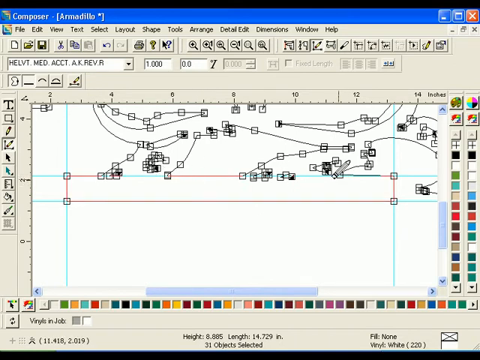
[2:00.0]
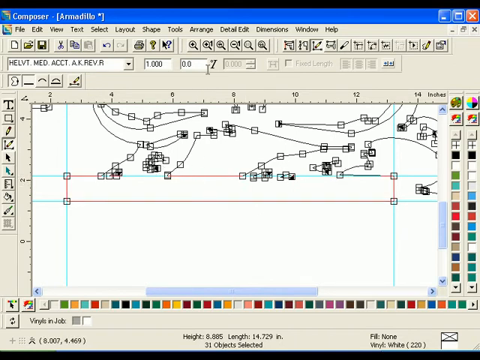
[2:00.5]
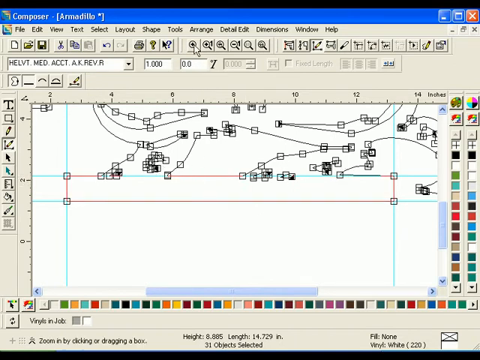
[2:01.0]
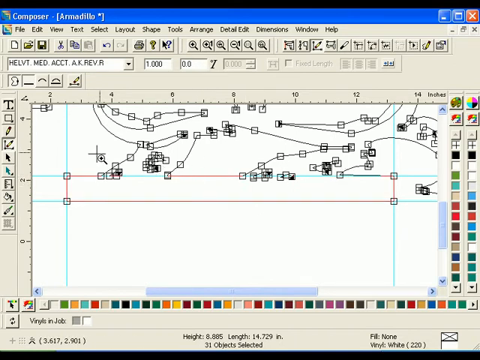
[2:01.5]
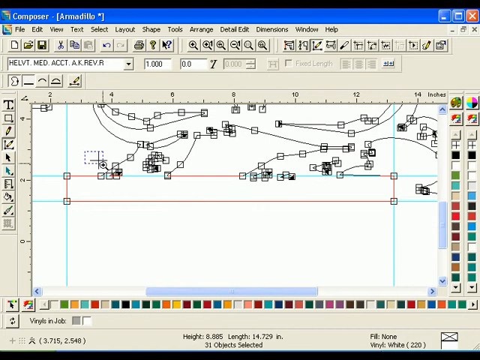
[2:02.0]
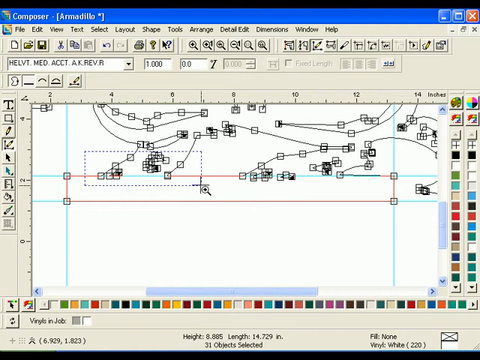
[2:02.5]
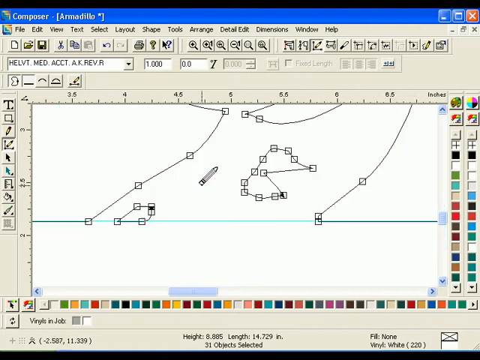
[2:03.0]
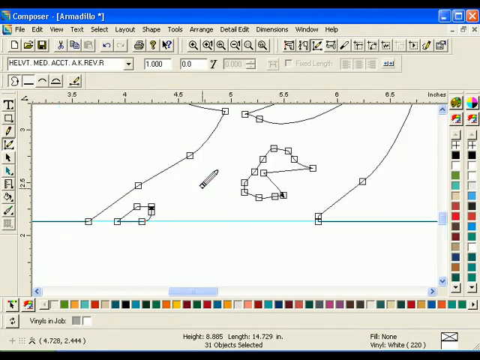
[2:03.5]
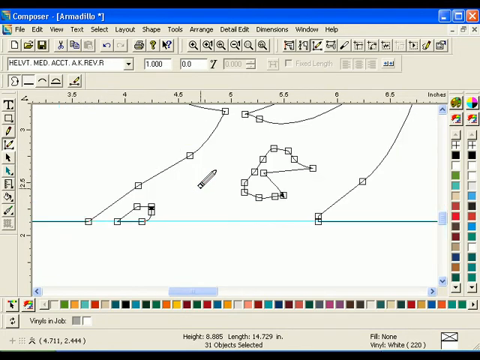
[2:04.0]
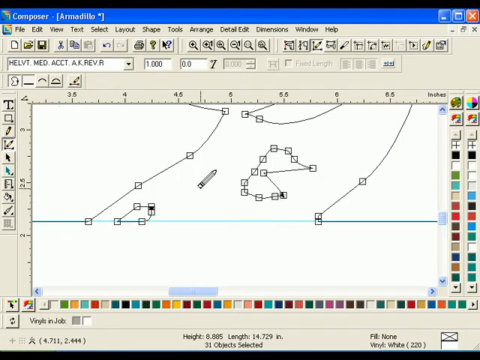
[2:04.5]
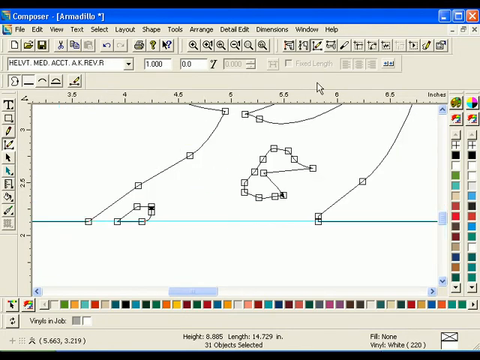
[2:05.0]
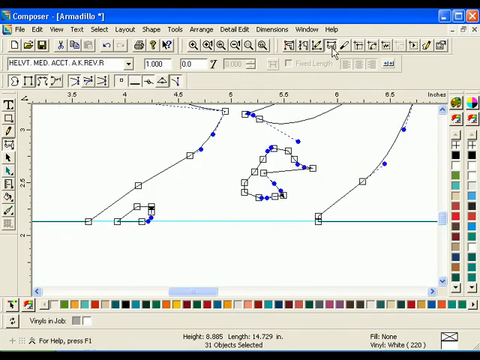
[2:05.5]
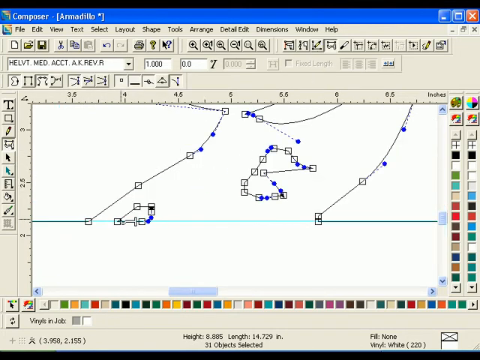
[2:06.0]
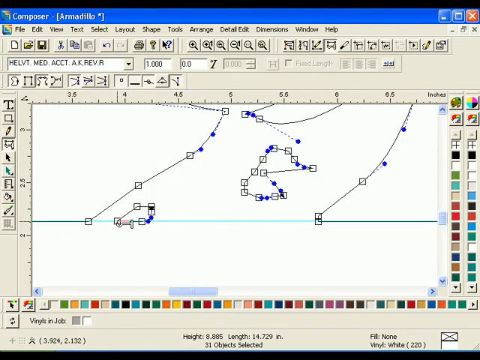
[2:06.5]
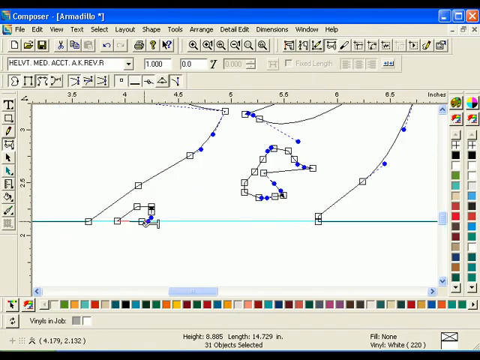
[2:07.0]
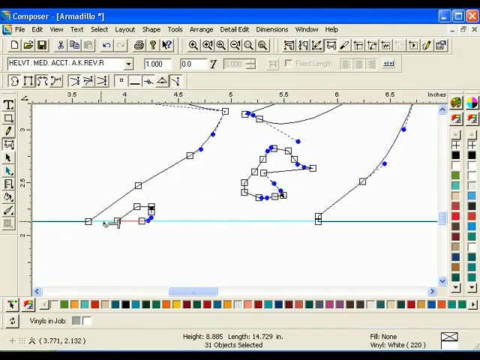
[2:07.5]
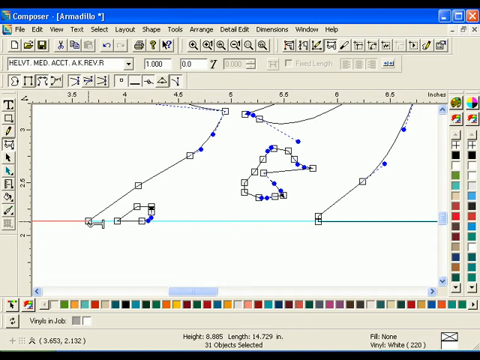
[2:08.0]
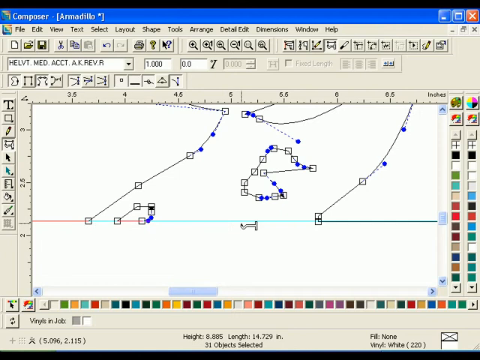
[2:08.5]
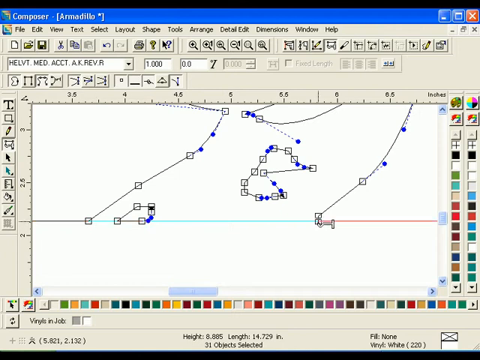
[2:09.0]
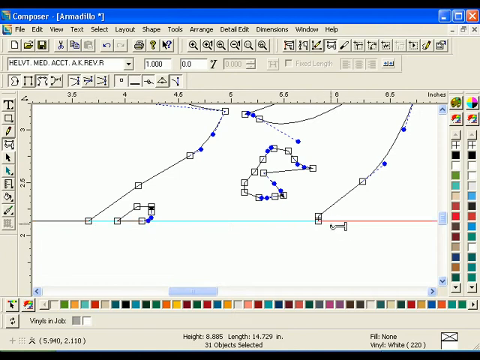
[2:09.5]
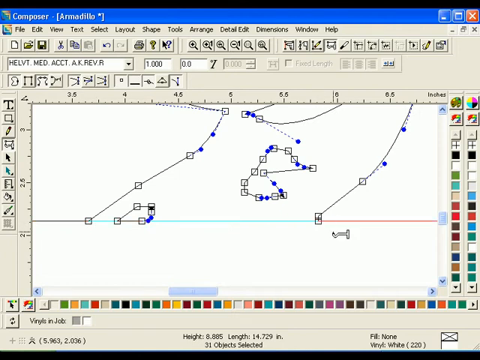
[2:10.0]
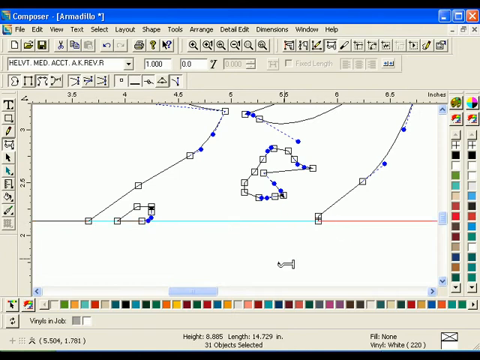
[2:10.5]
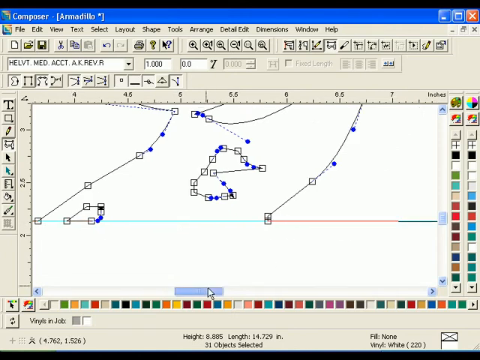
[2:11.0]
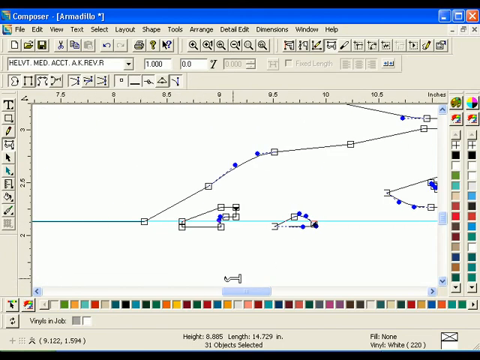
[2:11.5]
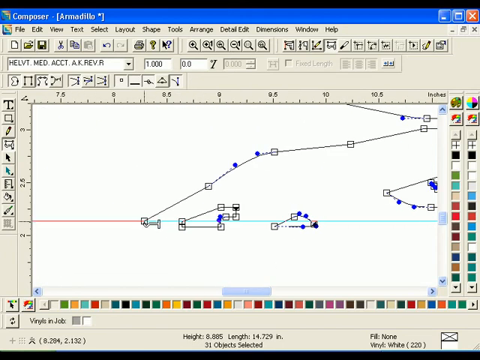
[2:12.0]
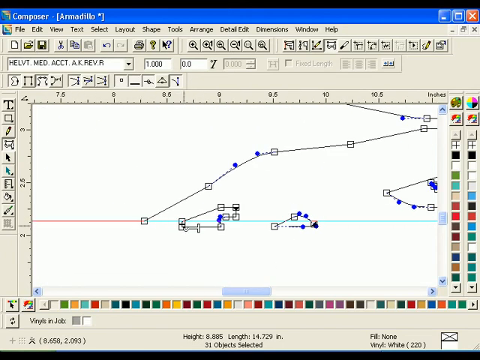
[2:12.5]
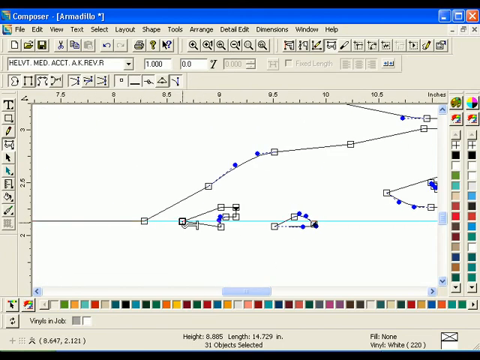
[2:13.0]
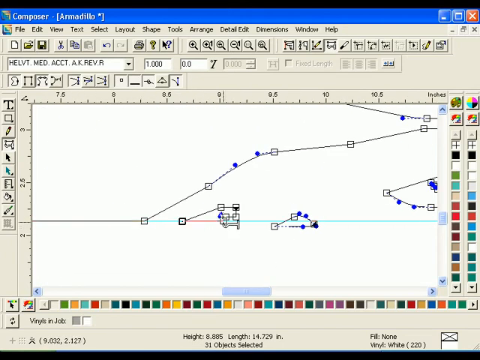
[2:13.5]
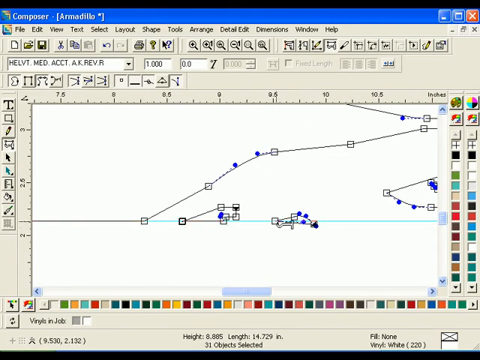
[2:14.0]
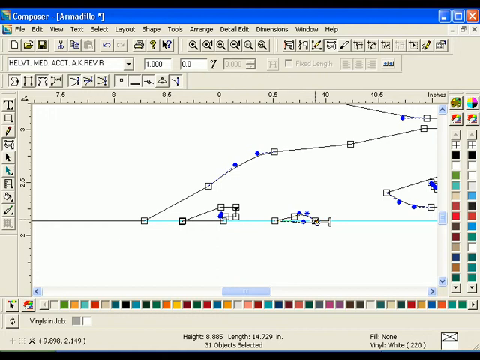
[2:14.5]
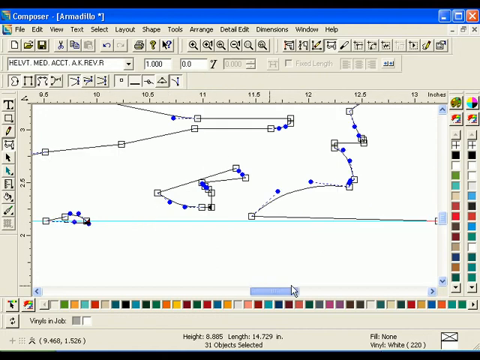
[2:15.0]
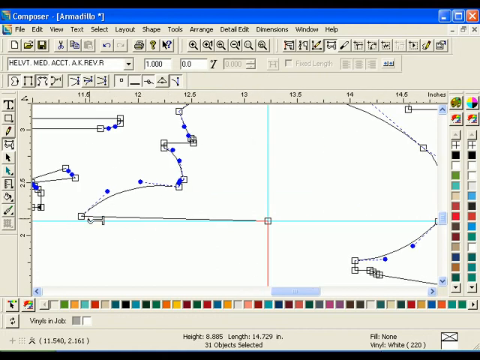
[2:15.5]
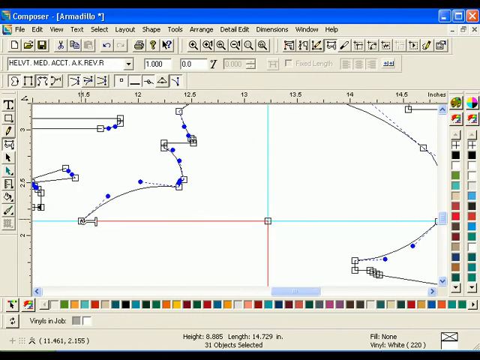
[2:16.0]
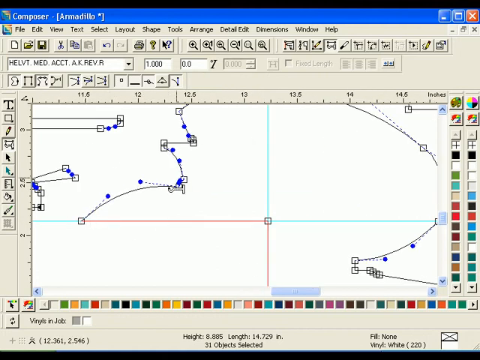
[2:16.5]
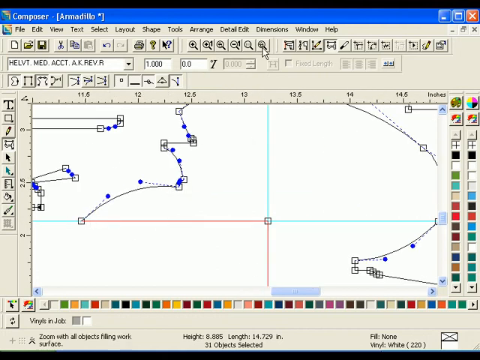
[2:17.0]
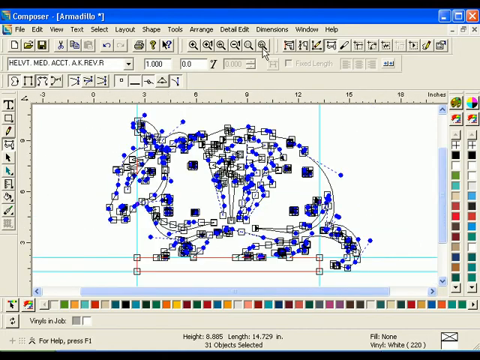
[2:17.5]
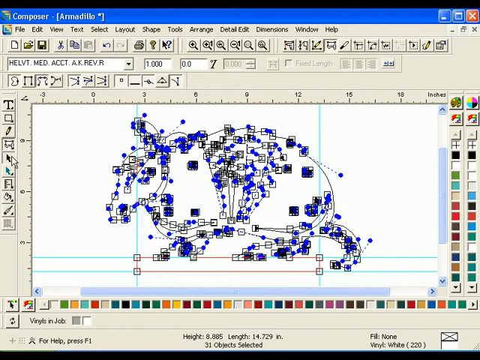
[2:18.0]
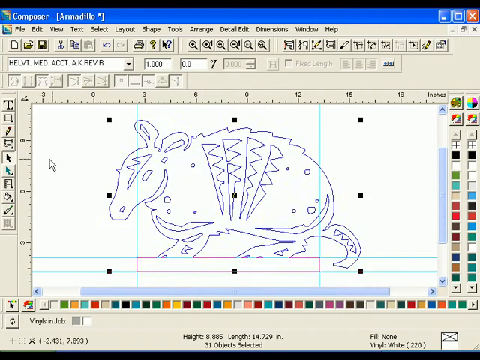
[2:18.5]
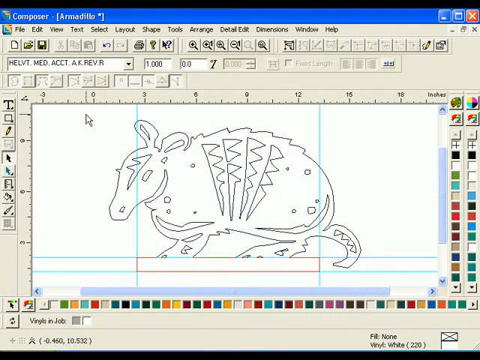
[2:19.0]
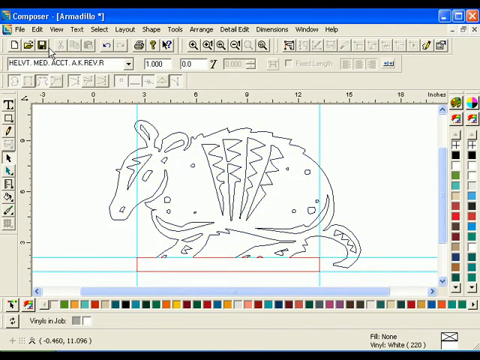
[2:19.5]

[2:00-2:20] An editing tool that looks almost like a paint application, but is not, is shown. White text at the top left reads "composer -" and then, in parentheses, "armadillo." There appear to be three rows of icons at the top, and at the very top the headers read "file, edit, view, text, select, layout, shape, tools, arrange, detail, edit, dimensions, windows and help." At the bottom left, bottom right, bottom and right side of the application are many squares with colored text. The base of an armadillo appears to be being edited to give it true 90-degree angles and straighten it out. At the beginning, the delete tool appears to be active, with a cursor that looks like the eraser of a pencil. The mouse then clicks a zoom button among the icons and makes a purple square on the left side of the picture, where a horizontal teal line is shown; the view is zoomed in, with many squares around what appear to be the corners of the image. The mouse moves up to what appears to be the move tool, and the cursor becomes a hook. It begins pulling the squares down into line with the horizontal teal line; when a square is exactly level with the teal line, it becomes a red line instead of teal. The cursor then drags the scroll bar to the right and adjusts more squares, dragging them up and down to bring them in line with the teal line. Finally it moves up and clicks the save button.